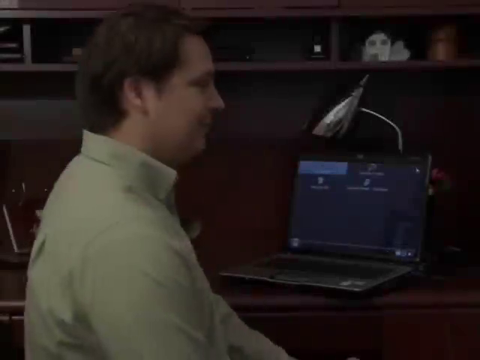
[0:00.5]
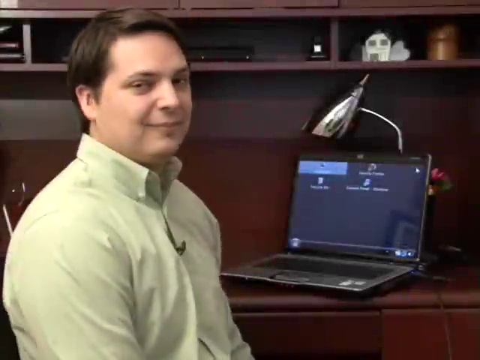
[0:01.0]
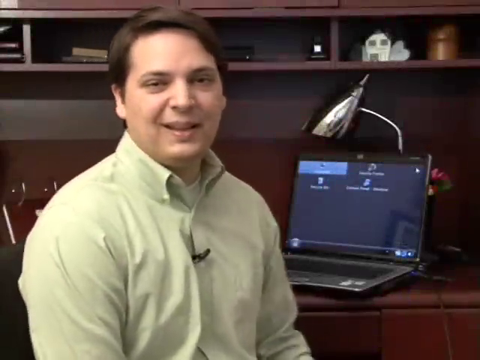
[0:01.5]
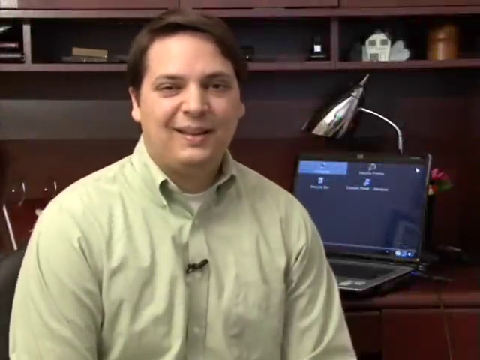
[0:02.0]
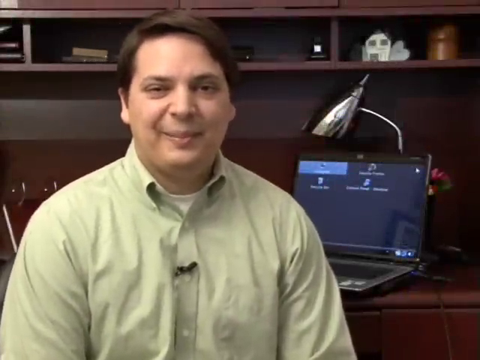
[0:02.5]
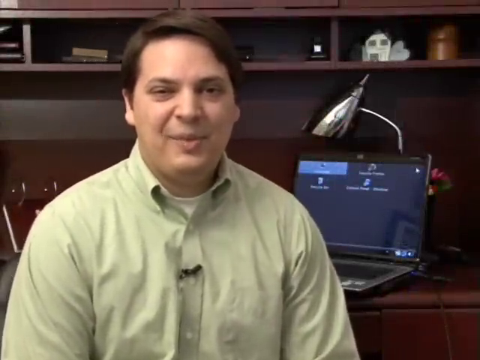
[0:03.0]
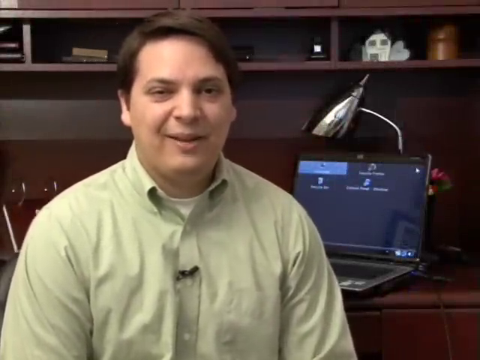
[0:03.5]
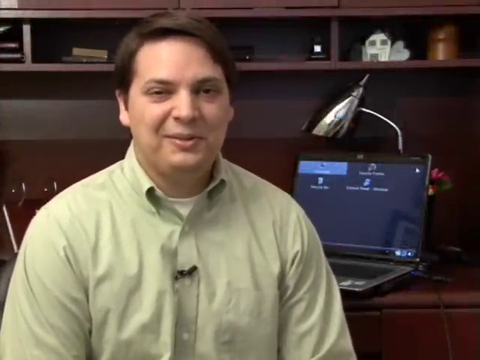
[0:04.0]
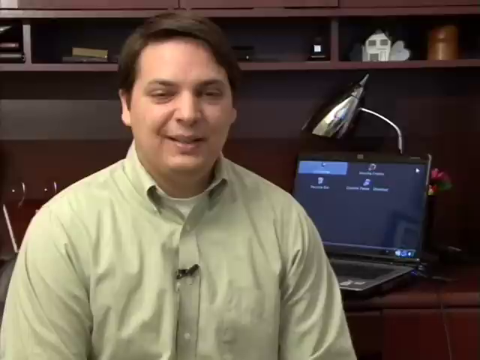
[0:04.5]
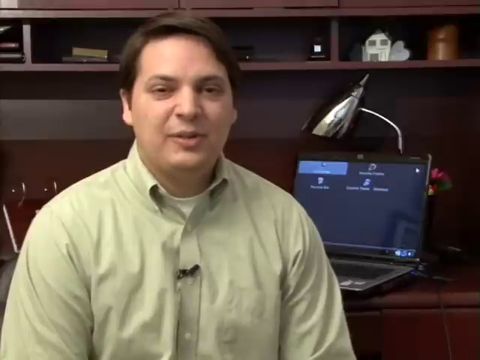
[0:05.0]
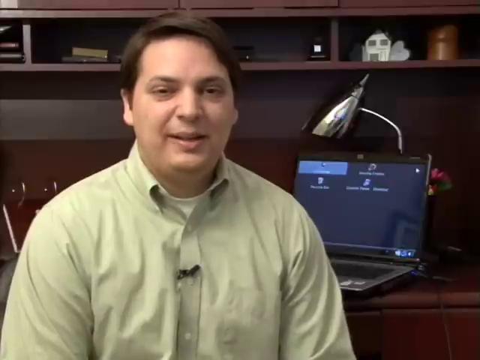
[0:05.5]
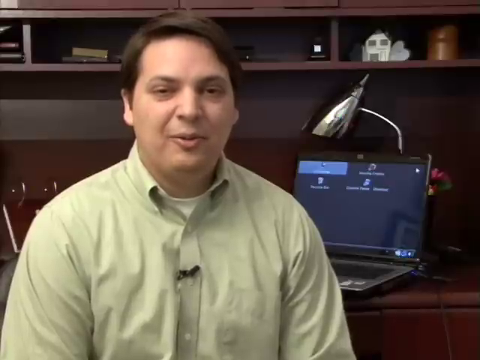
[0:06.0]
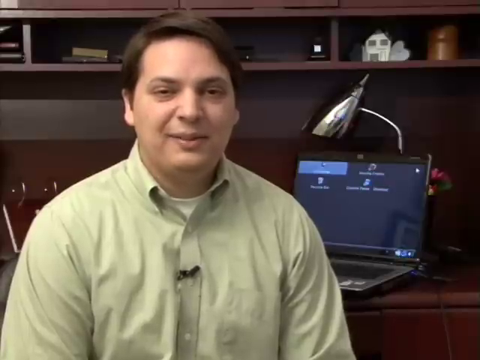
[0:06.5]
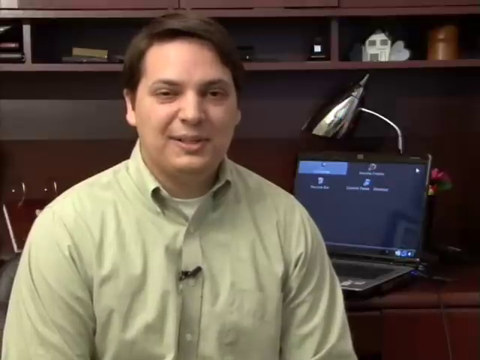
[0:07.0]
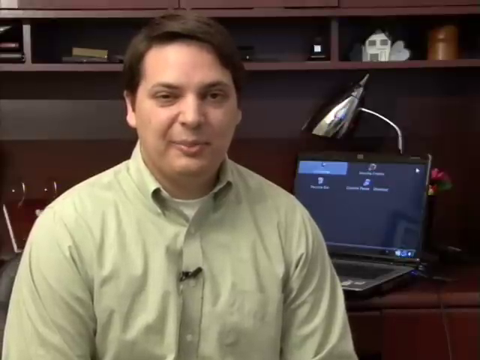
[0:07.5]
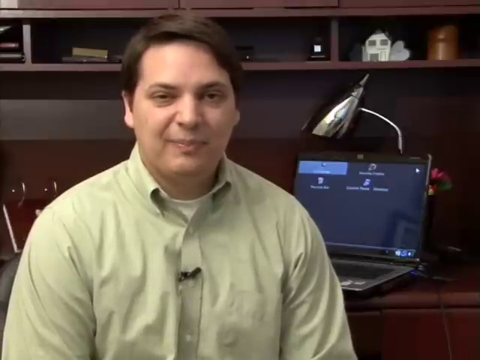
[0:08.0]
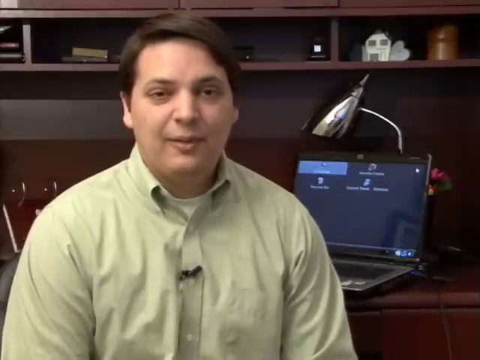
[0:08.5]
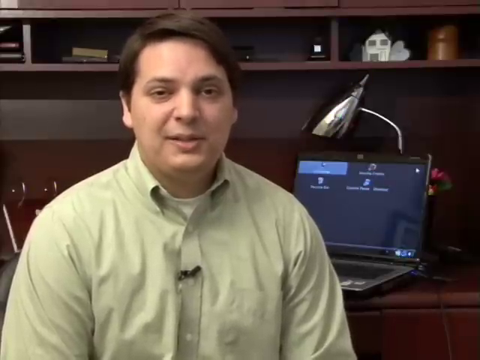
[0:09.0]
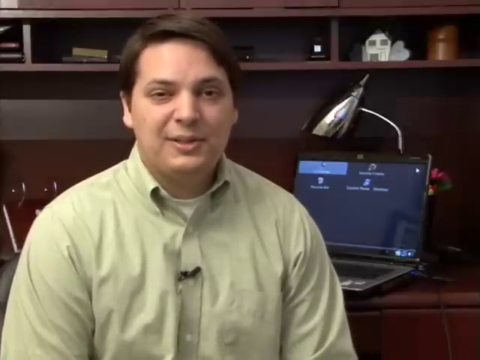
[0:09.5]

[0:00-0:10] A man faces away from the camera. He has brown hair and olive skin, is a bit chubby, and wears a light green button-up shirt; he is also described as wearing a white shirt with a black button-up shirt and a light green button-up shirt. Behind him, a large dark brown desk covers the full background, with three cubbies across the top of the frame holding different knick-knacks. To the right is the man's laptop, open with the screen on and a few blurry icons on the screen, and directly above it is a silver triangular desk lamp. The man turns clockwise toward the camera and faces it from the left side of the screen, beginning to speak as a small smile crosses his face.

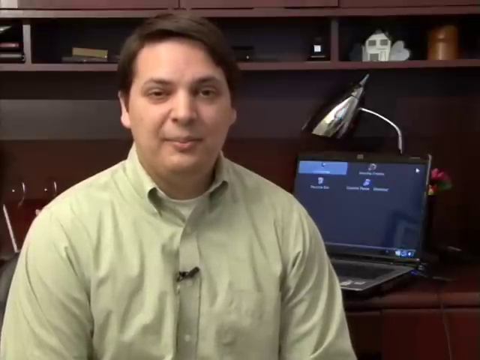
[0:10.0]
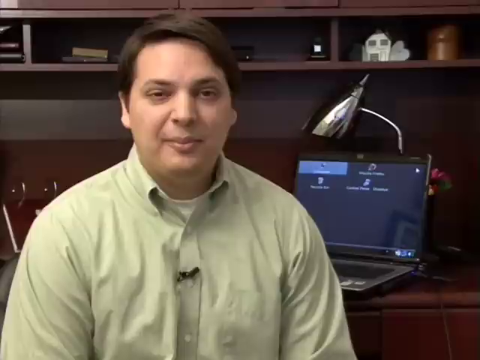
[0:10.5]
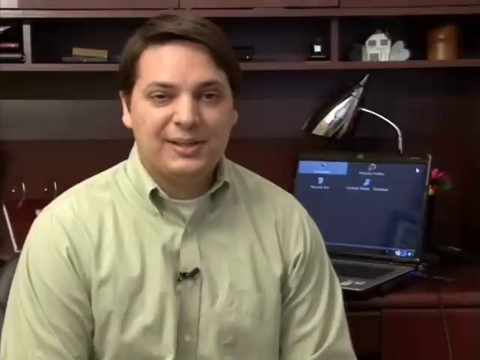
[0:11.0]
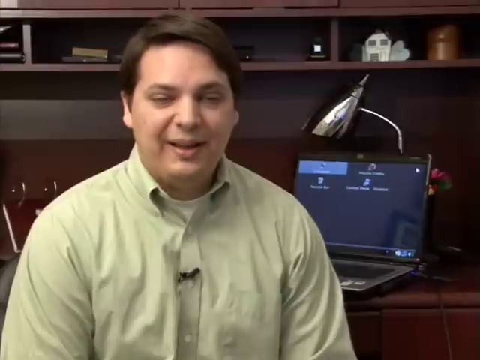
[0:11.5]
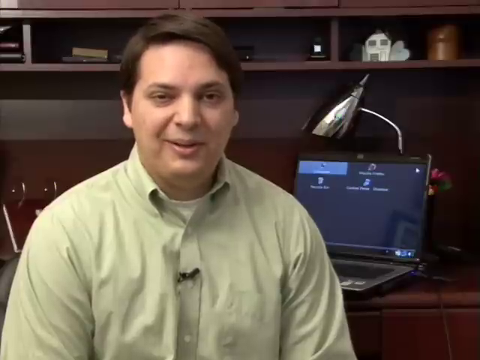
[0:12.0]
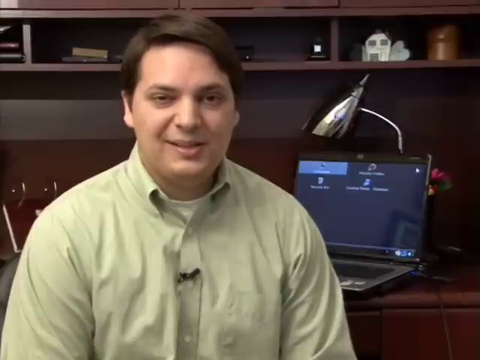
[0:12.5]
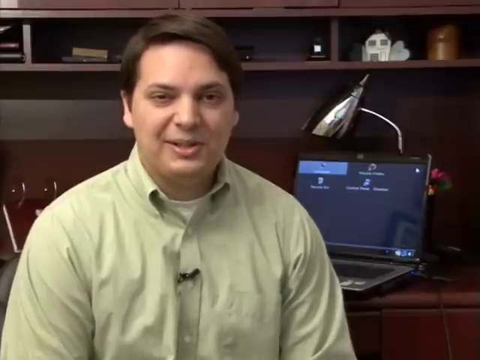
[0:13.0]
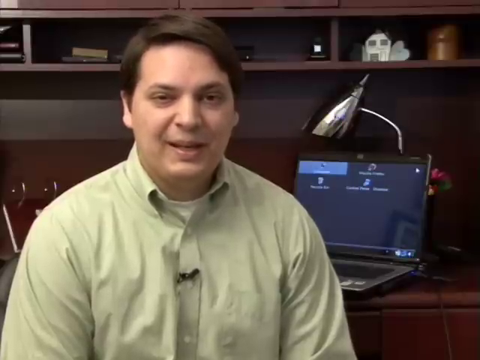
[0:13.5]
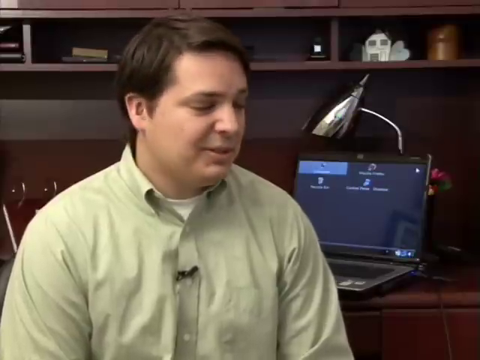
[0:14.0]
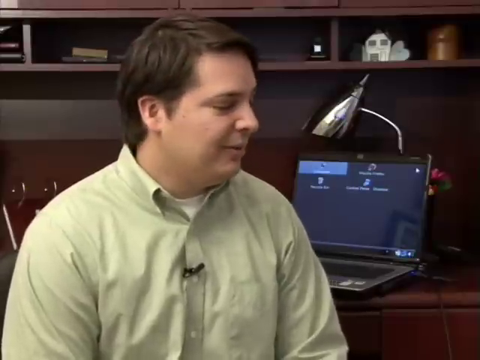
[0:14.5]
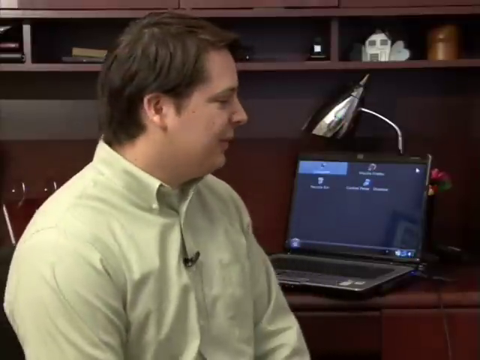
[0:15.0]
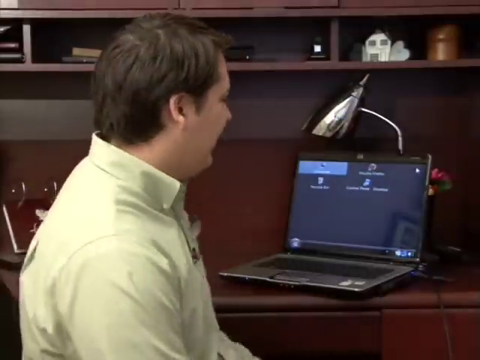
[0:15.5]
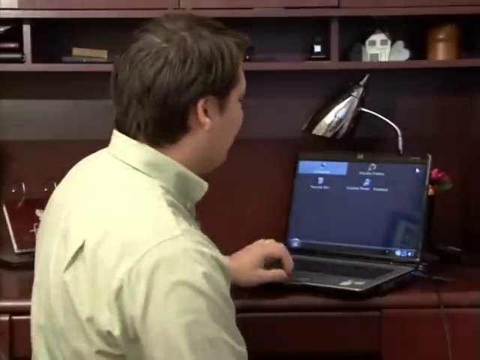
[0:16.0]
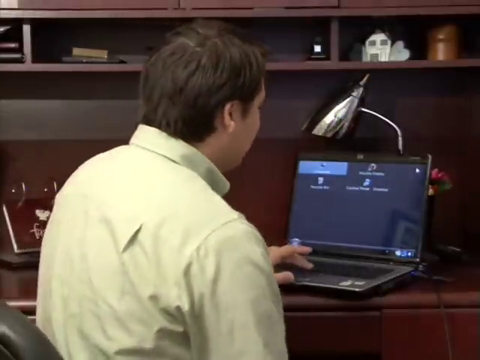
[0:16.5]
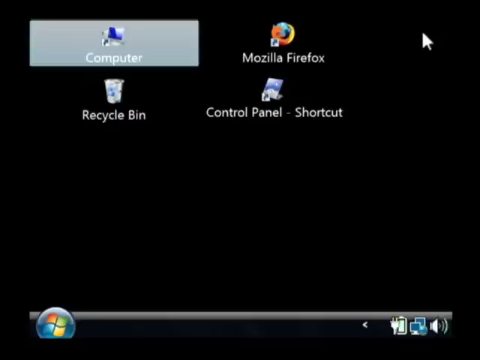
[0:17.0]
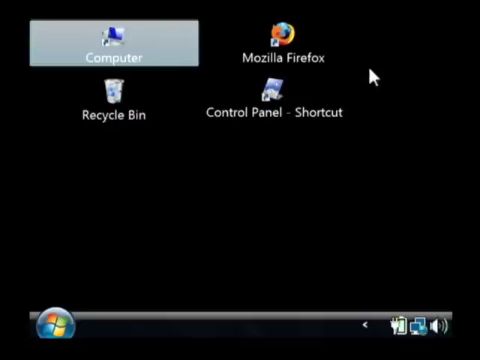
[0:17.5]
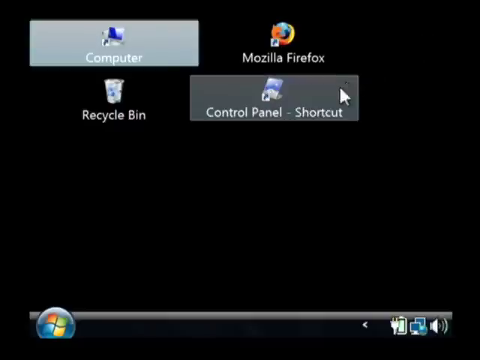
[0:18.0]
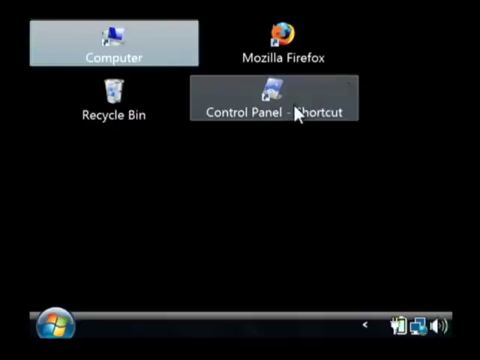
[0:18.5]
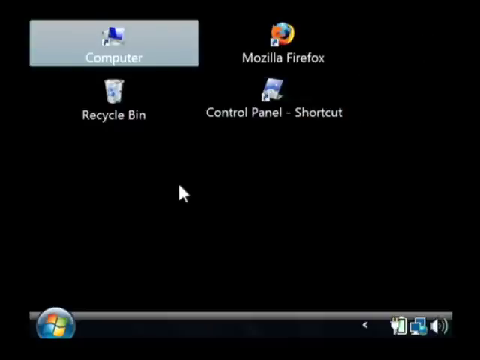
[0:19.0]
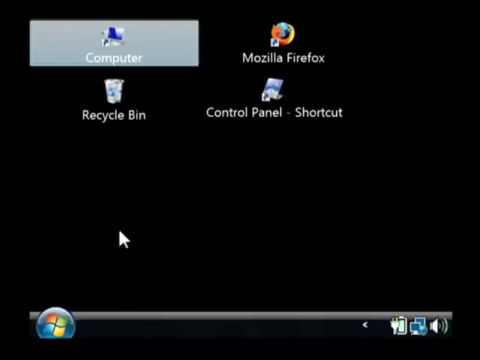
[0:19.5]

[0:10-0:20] In a close-frame shot, a man with brown hair and olive skin, wearing a light green button-up shirt with a lapel mic on it, talks to the camera from the left side of the screen. To the right, slightly behind him, is an open laptop with a few blurred icons on the screen, and directly above it is a silver triangular desk lamp. Across the top of the screen are cubbies holding various knickknacks, part of his dark brown desk that fills the background. He talks for a few moments with a slight smile, then turns to the right to face his computer, and the video immediately transitions to a screen share of the computer screen. The screen has a black background with a Windows logo on the bottom left and battery and sound icons on the bottom right. The icon in the top left is a blue icon labeled "computer", with a gray rectangle behind it showing it is selected. Directly to its right is the Mozilla Foxfire icon, labeled in white text. Below the computer icon is a recycling bin icon labeled in white text, and to the right of that, below the Mozilla icon, is the control panel shortcut icon, labeled in white text. A white mouse pointer comes in diagonally from the top right of the screen and moves across toward the left side.